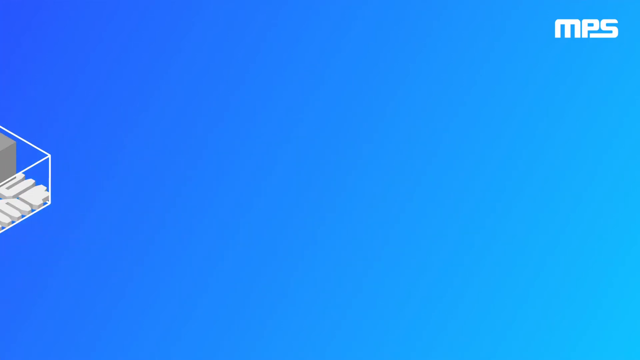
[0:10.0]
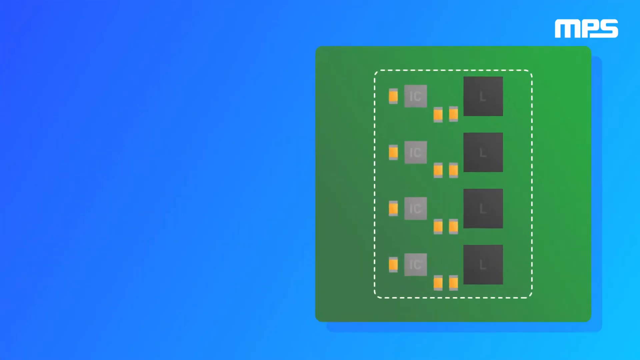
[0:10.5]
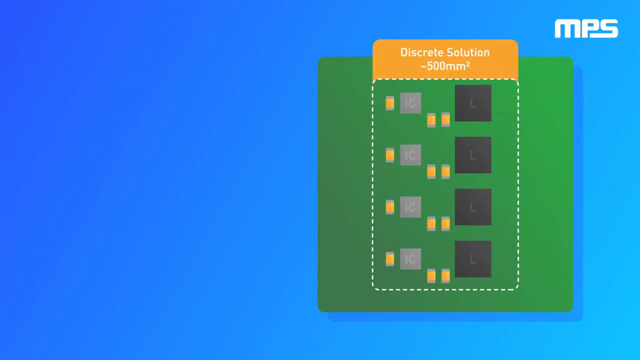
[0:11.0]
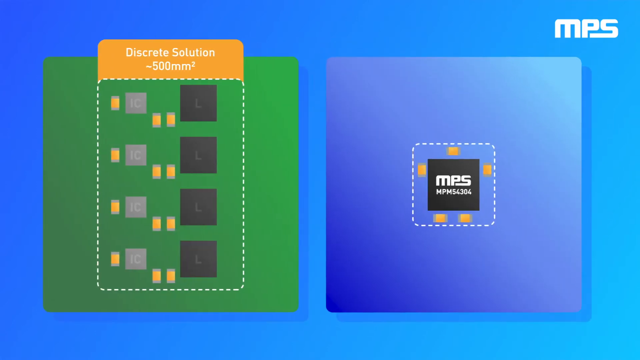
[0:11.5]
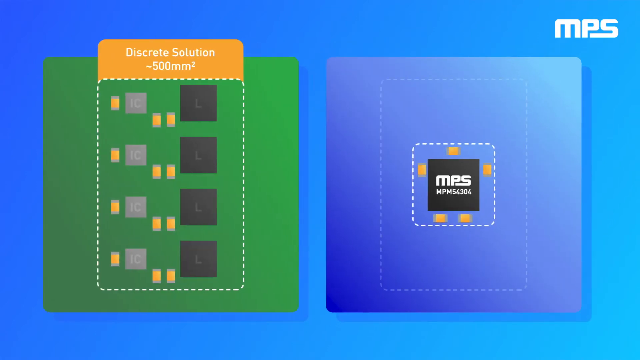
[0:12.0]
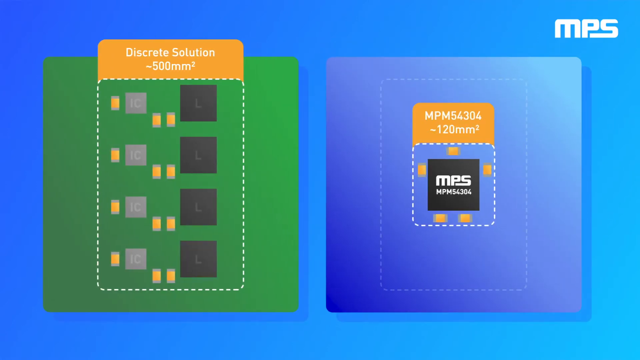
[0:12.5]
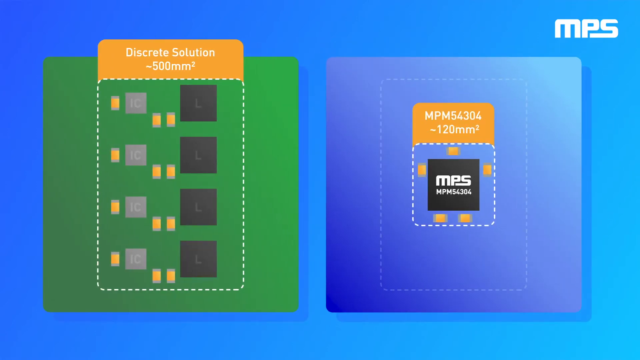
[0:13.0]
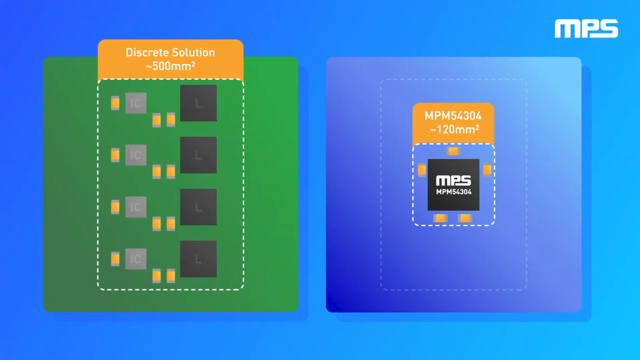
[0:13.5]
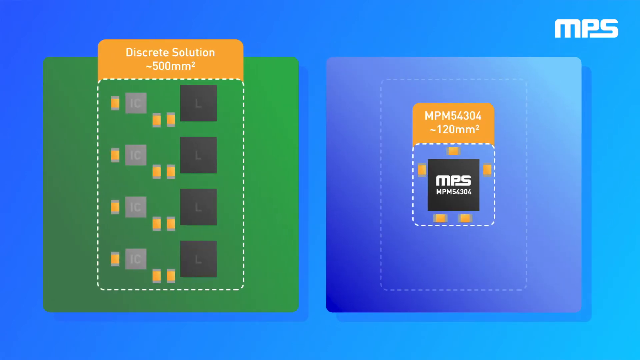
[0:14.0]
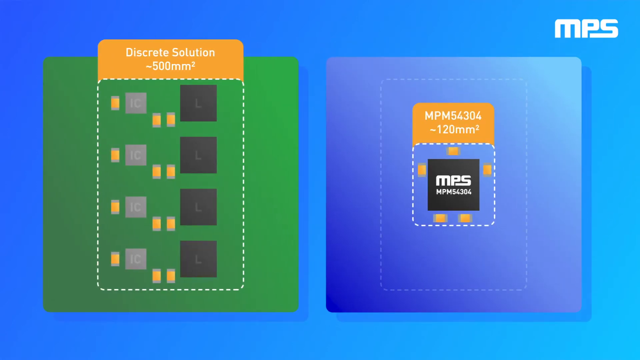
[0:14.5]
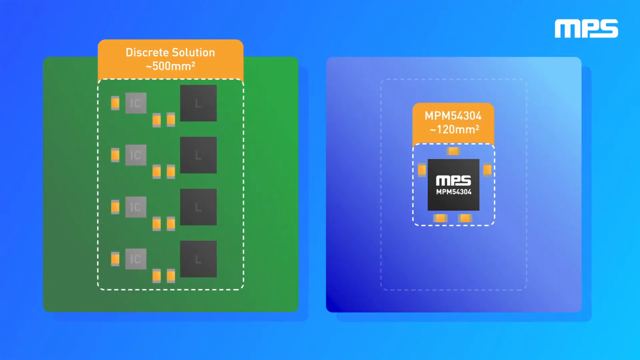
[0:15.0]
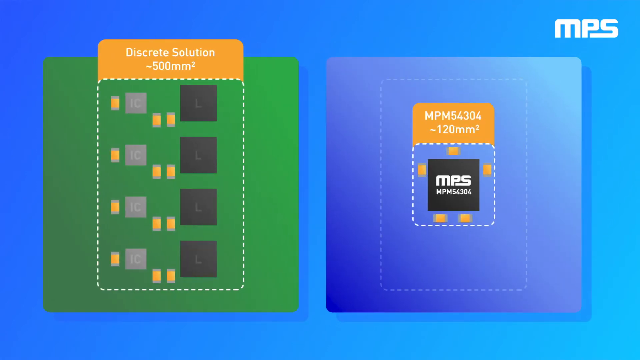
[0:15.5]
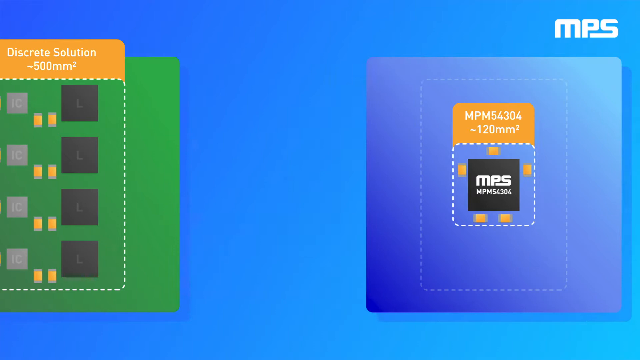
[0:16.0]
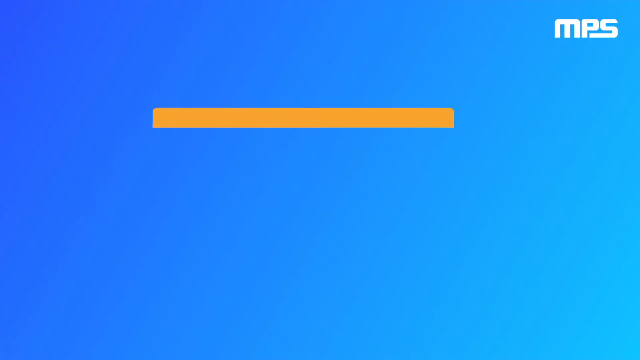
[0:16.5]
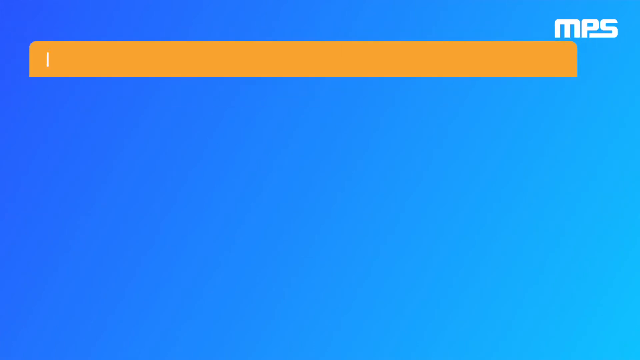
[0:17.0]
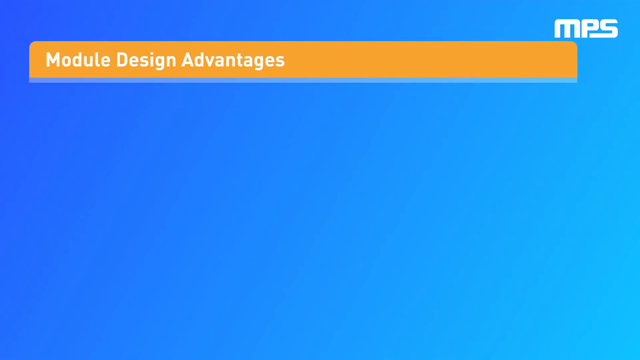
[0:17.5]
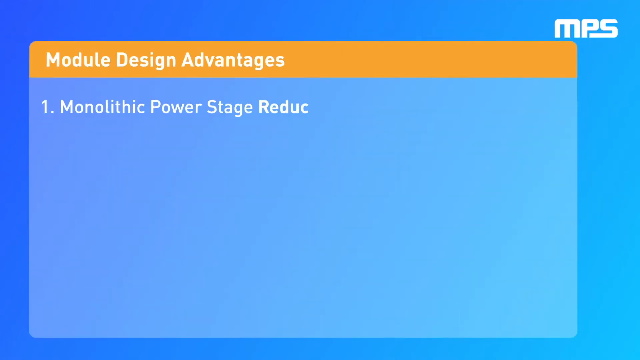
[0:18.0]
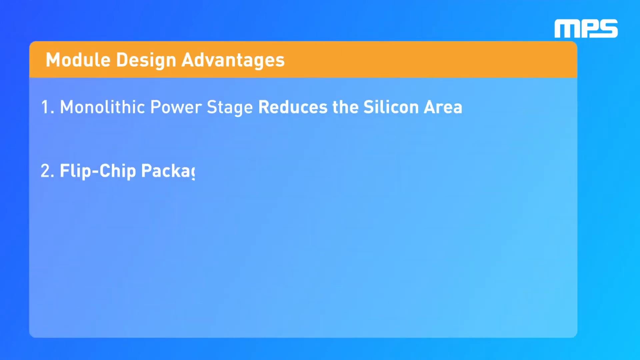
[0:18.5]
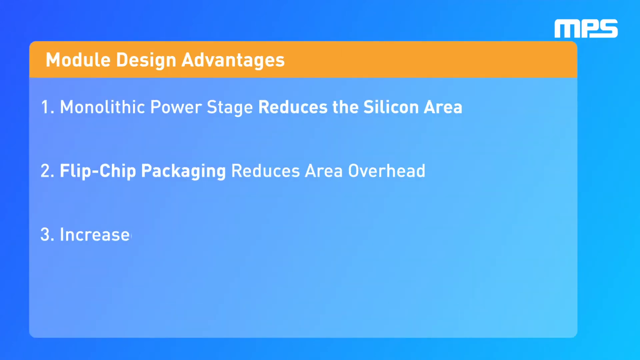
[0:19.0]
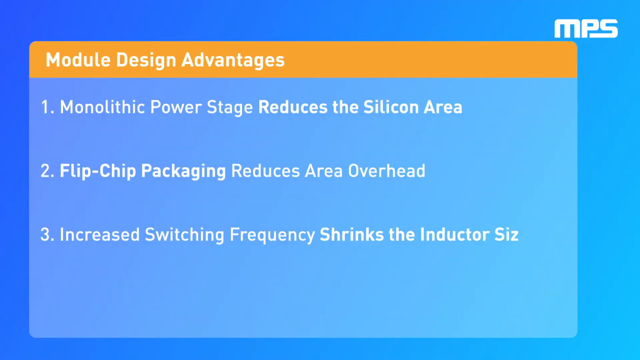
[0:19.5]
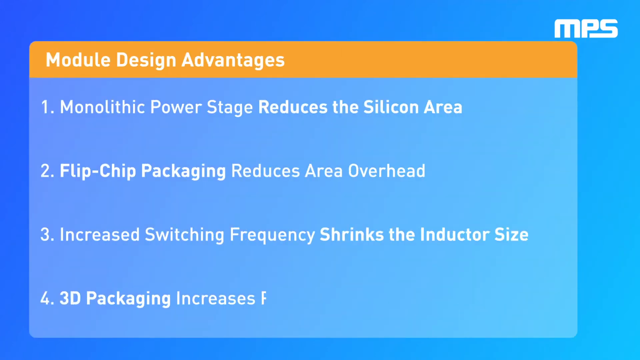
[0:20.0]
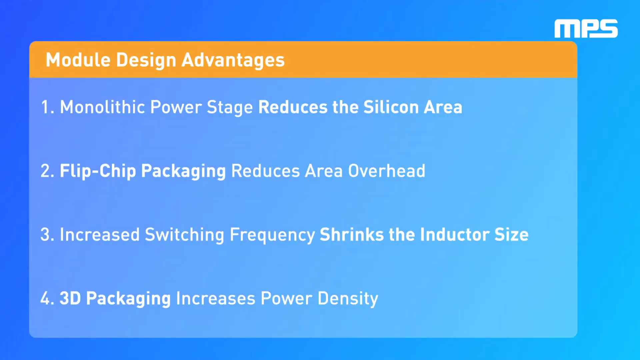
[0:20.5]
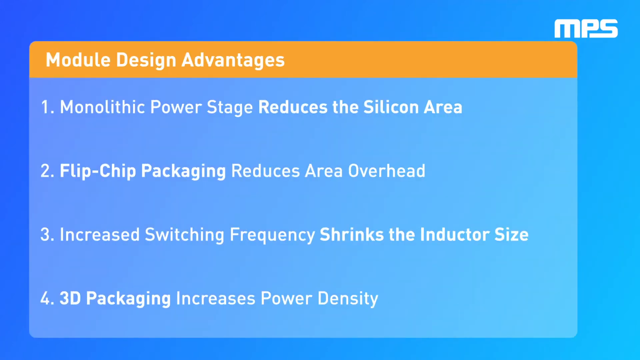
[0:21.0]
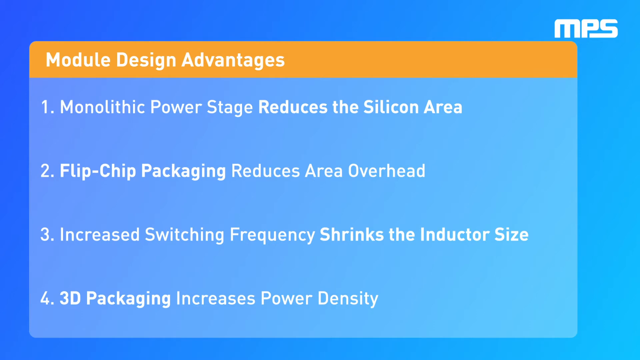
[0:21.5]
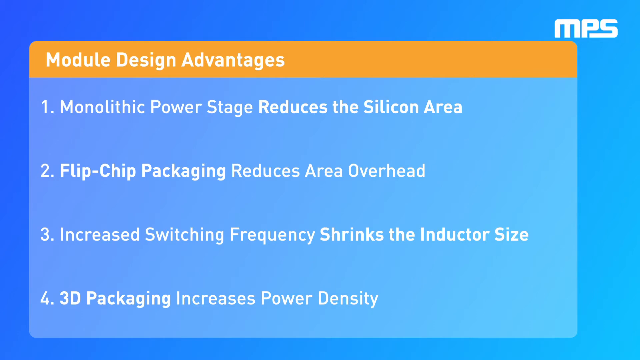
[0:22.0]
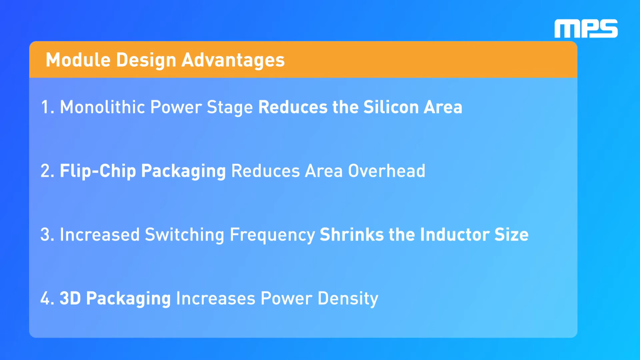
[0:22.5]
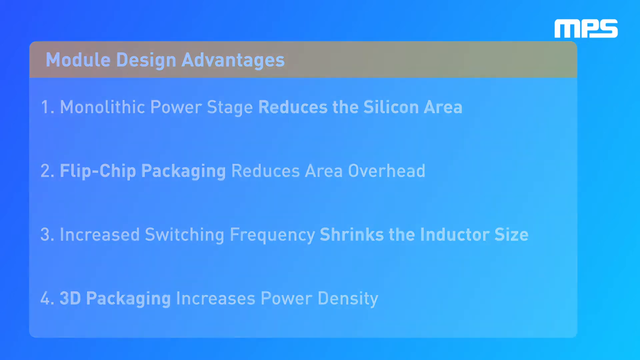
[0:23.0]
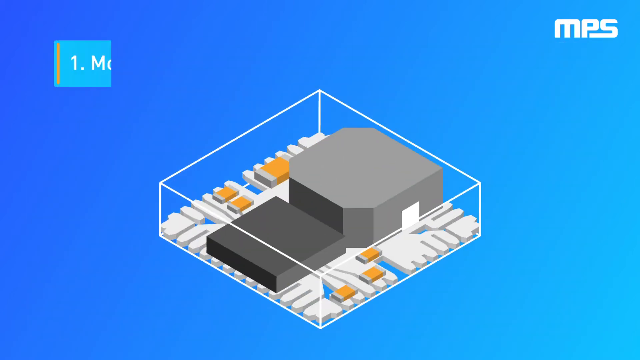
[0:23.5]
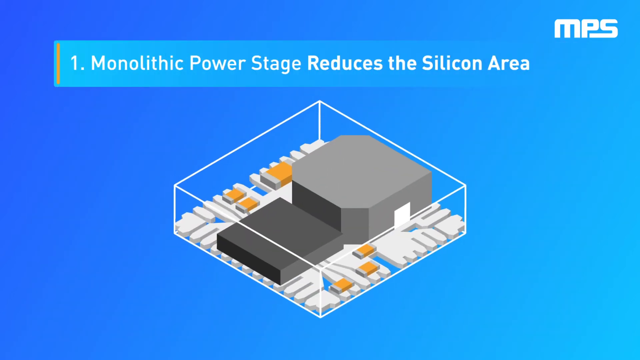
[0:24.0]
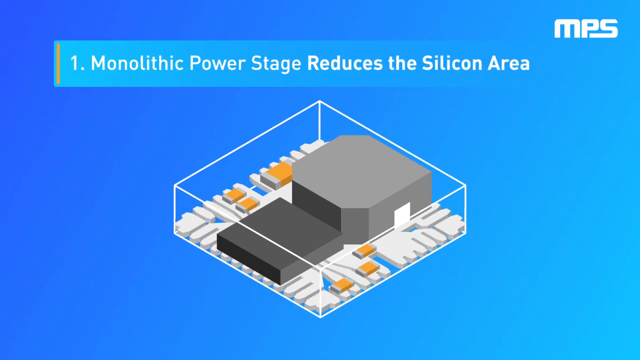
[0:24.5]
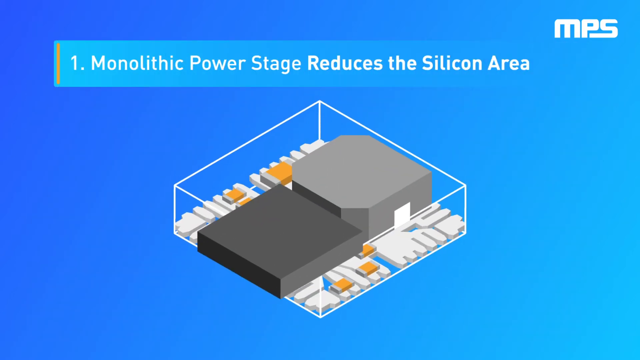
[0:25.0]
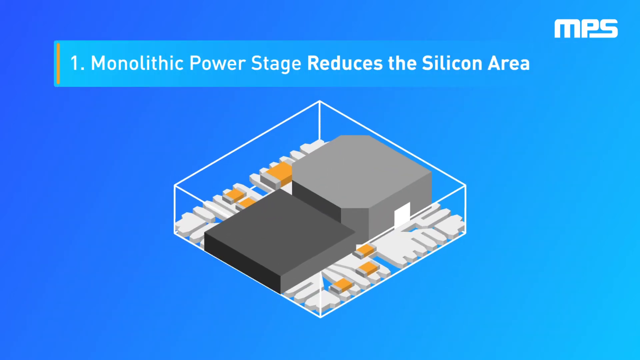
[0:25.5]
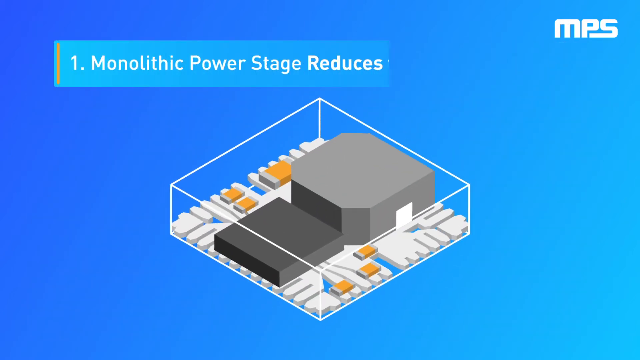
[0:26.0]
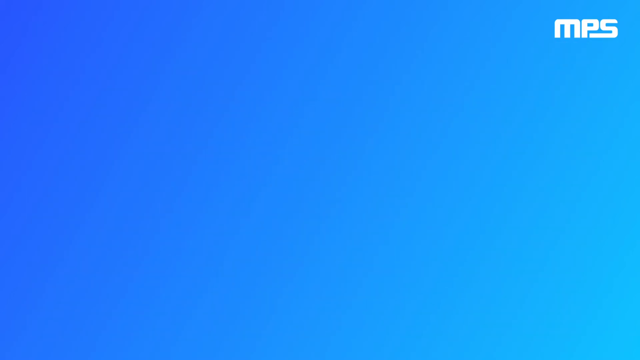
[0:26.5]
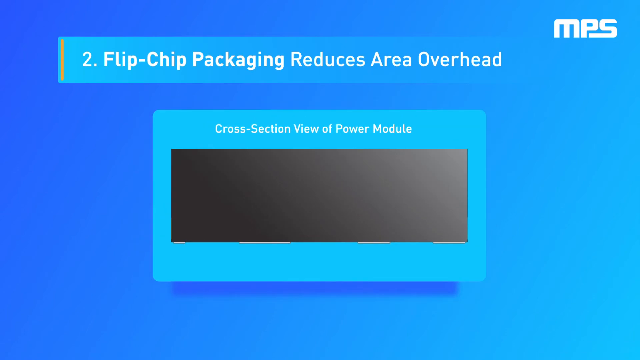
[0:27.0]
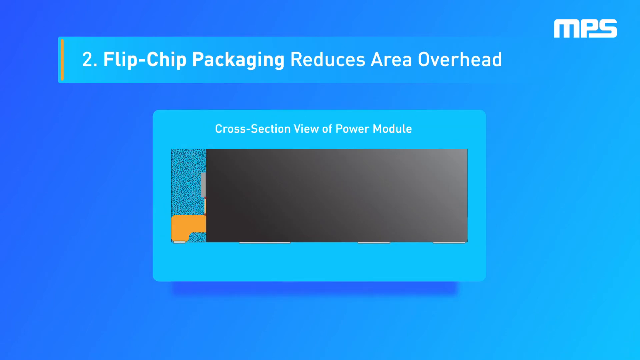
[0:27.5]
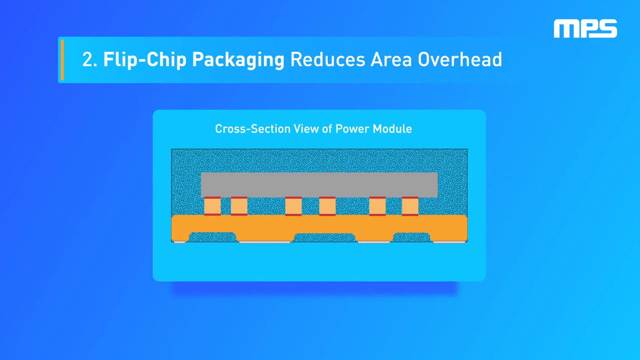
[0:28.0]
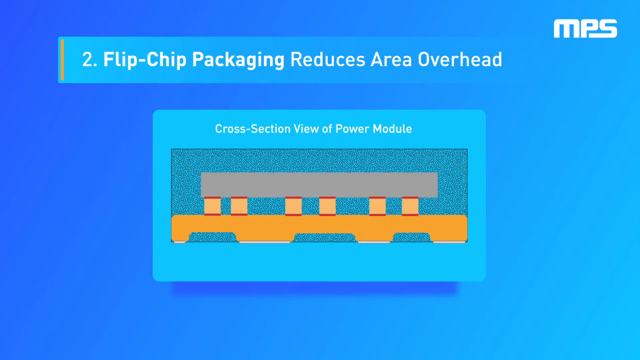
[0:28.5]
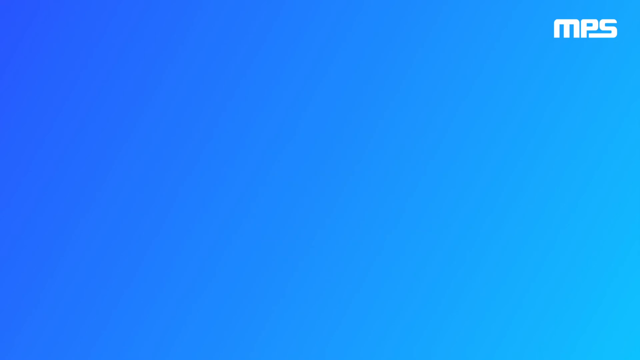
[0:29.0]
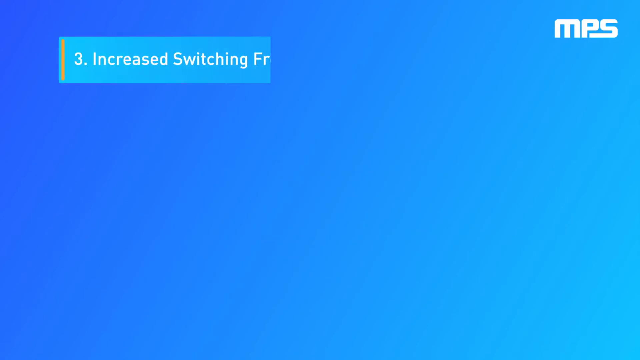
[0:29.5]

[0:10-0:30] The see-through structure swipes off the screen to the left and is replaced by a two-dimensional green circuit board of some sort on the right half of the screen. It is not very detailed, more of a cartoonish illustration, green with small black and gray squares and small gold bits that are maybe conductors of some sort. The words "discrete solution 500 millimeters squared" appear above it. The board then moves to the left, and a blue square with the MPS logo on it appears on the right side of the screen; it is 120 millimeters squared, perhaps indicating that MPS can provide a smaller one. A list of the module design advantages then appears on the screen, a four-bullet-point list numbered one to four showing the advantages of the Monolithic Power design. The same see-through square structure then appears on the screen again, followed by a more detailed explanation of each of the four items on the numbered list, with diagrams showing the advantages.